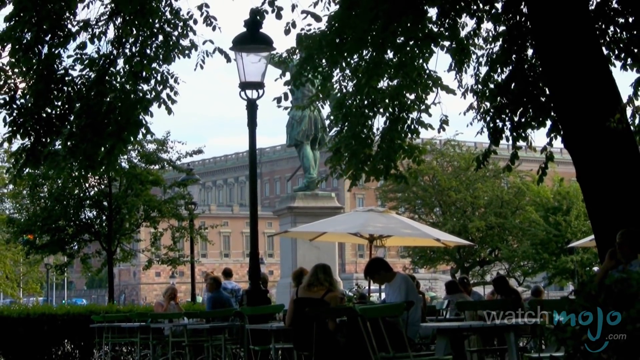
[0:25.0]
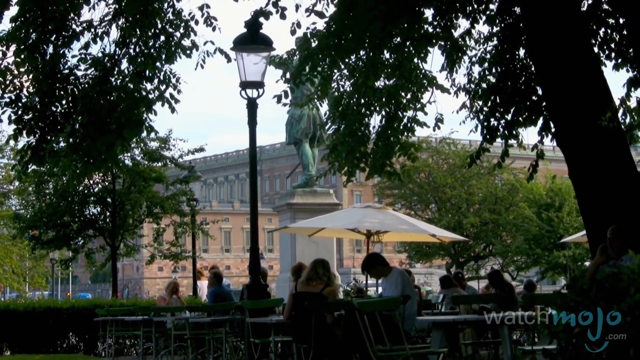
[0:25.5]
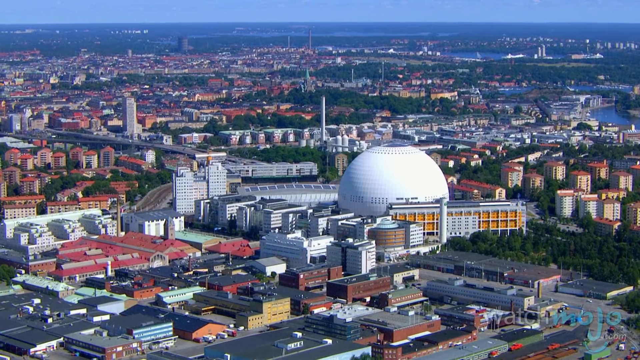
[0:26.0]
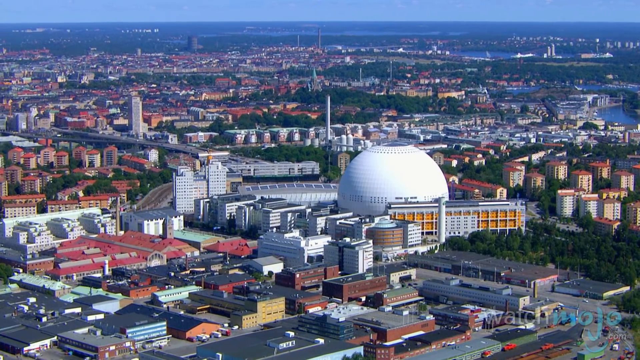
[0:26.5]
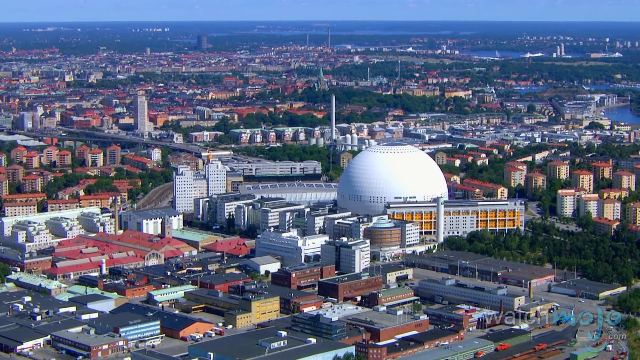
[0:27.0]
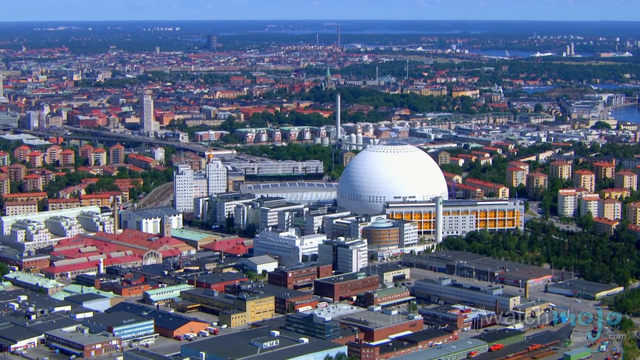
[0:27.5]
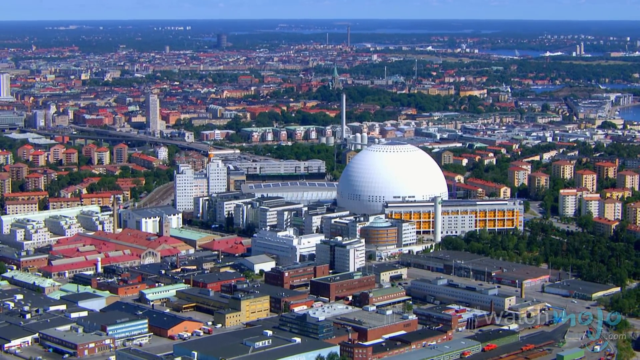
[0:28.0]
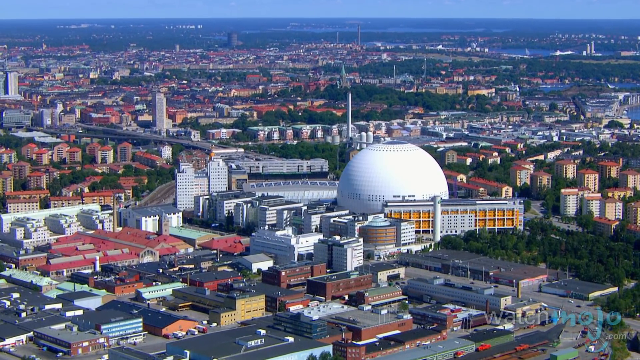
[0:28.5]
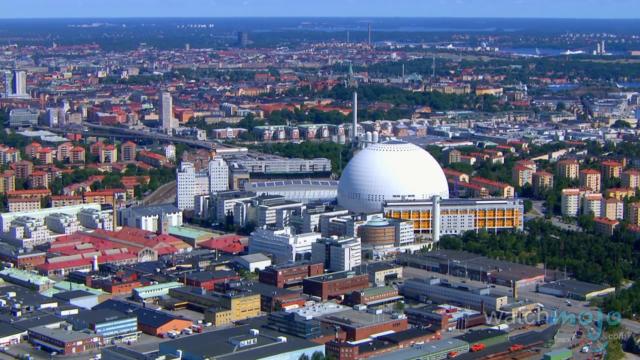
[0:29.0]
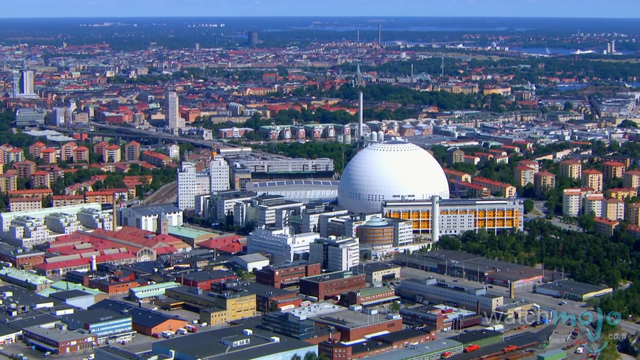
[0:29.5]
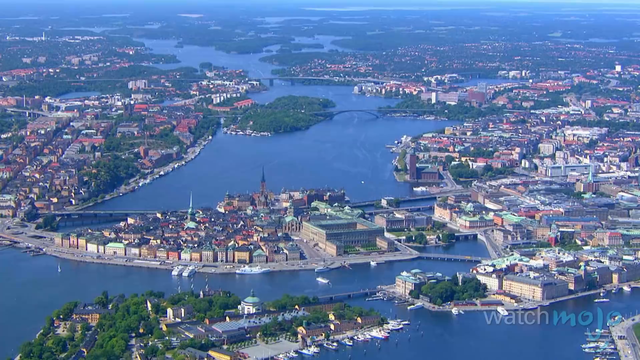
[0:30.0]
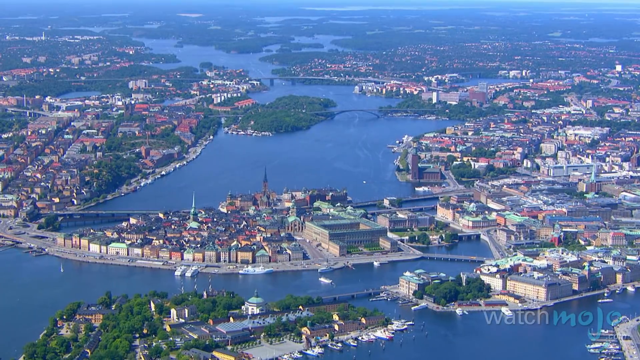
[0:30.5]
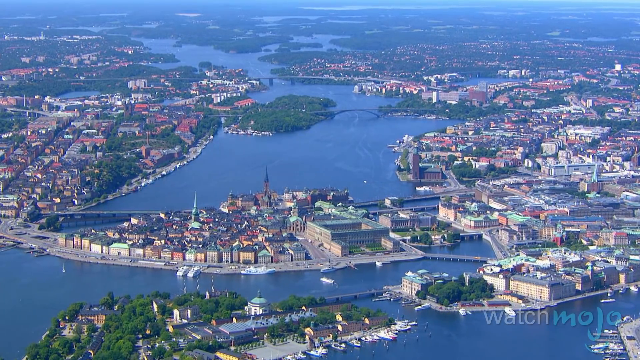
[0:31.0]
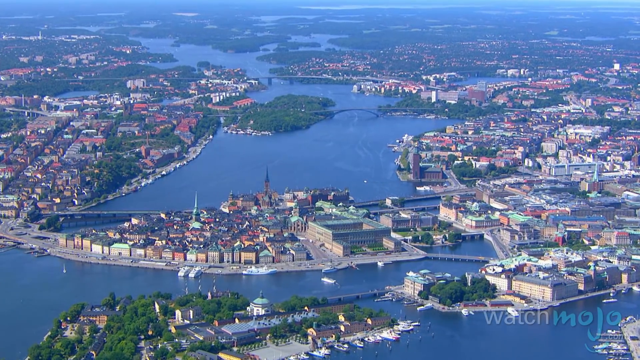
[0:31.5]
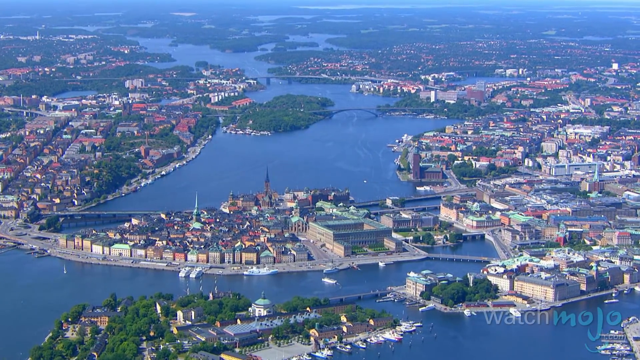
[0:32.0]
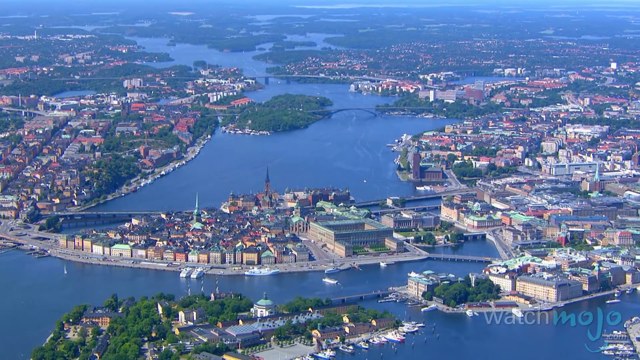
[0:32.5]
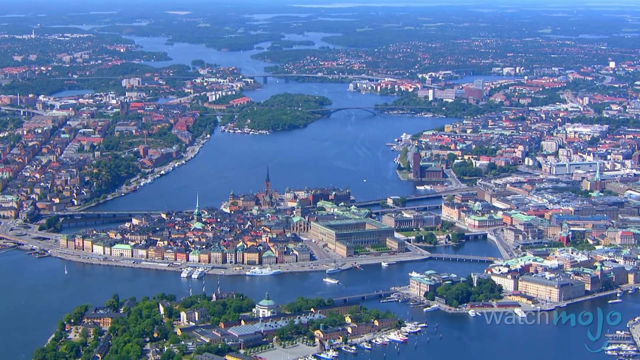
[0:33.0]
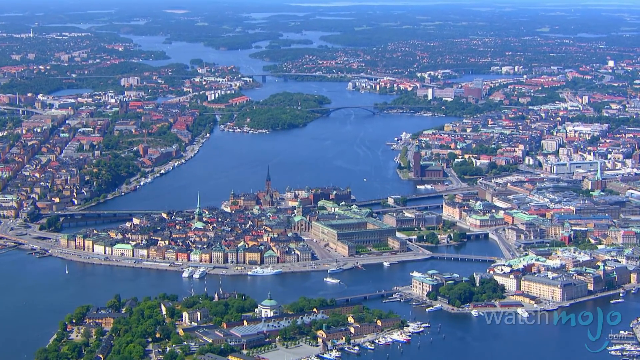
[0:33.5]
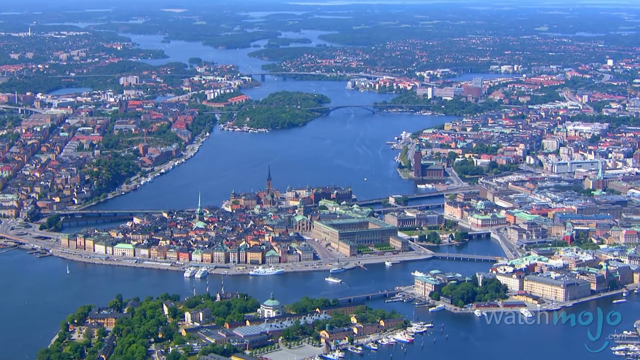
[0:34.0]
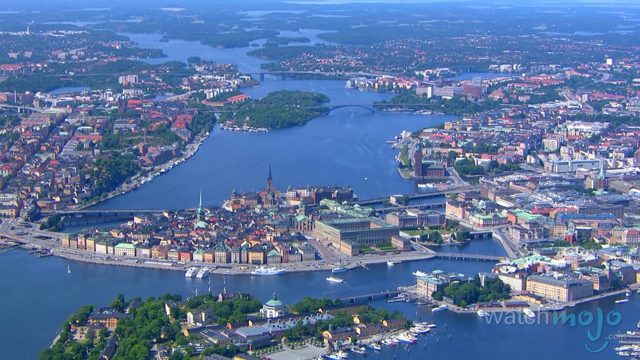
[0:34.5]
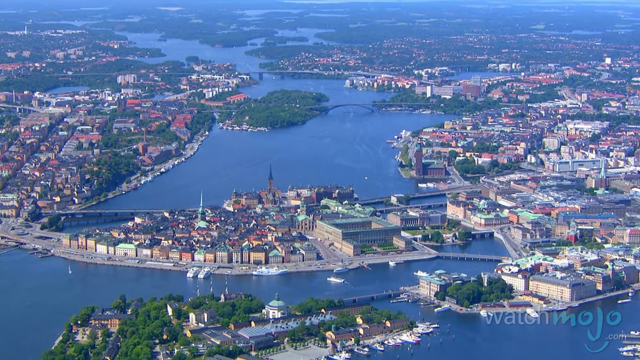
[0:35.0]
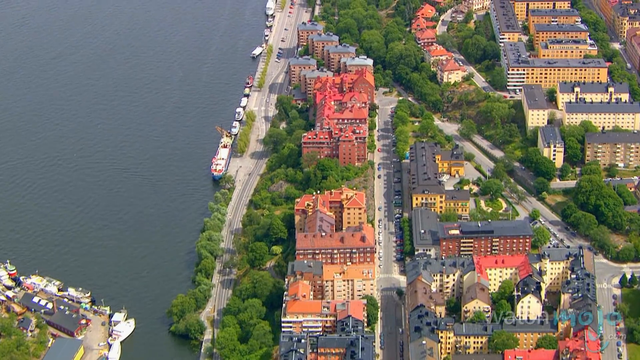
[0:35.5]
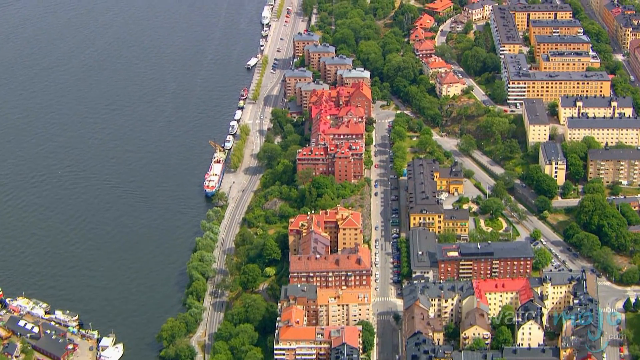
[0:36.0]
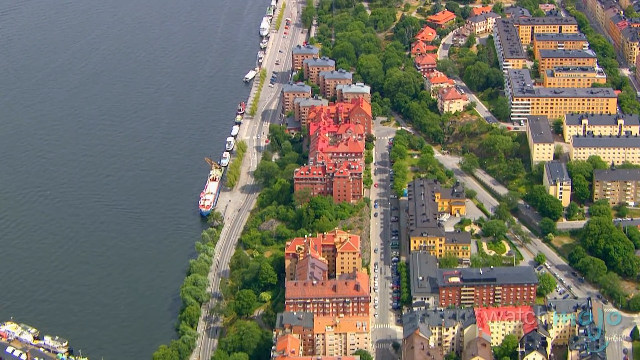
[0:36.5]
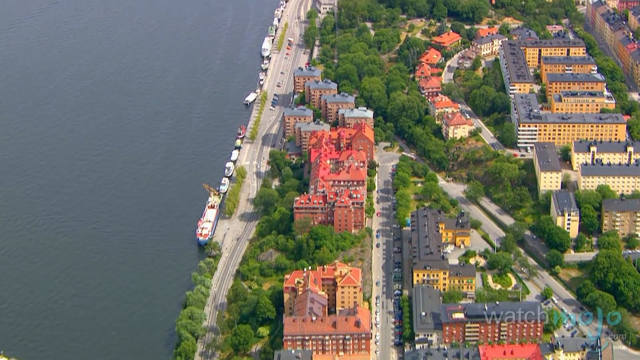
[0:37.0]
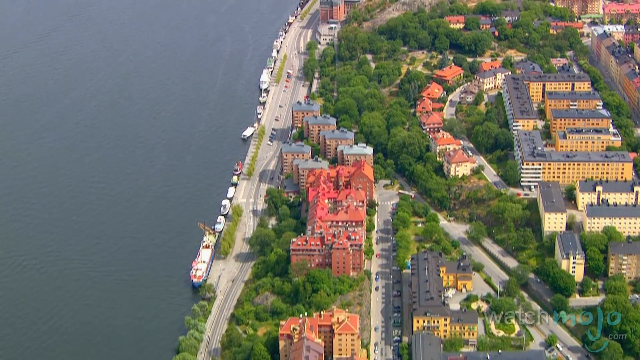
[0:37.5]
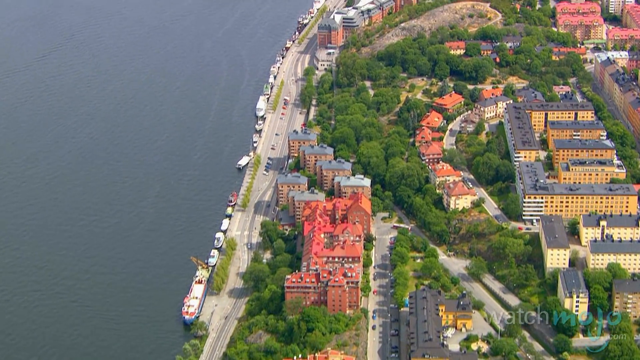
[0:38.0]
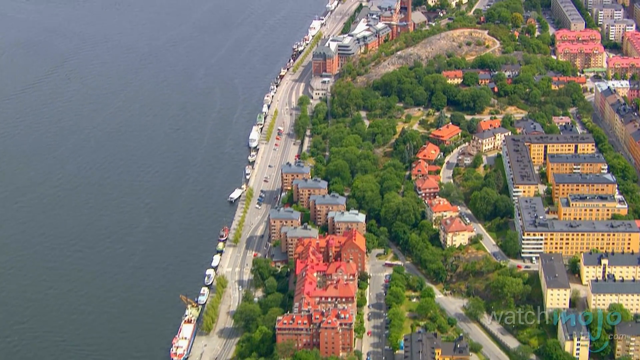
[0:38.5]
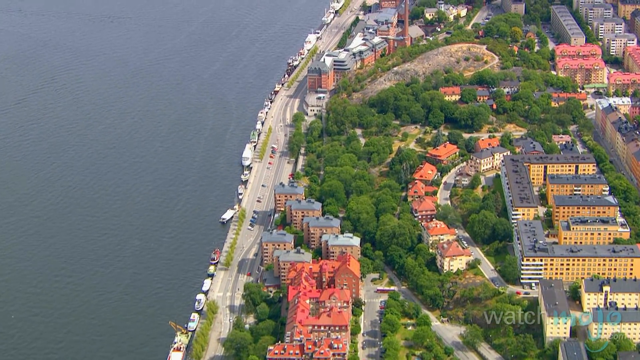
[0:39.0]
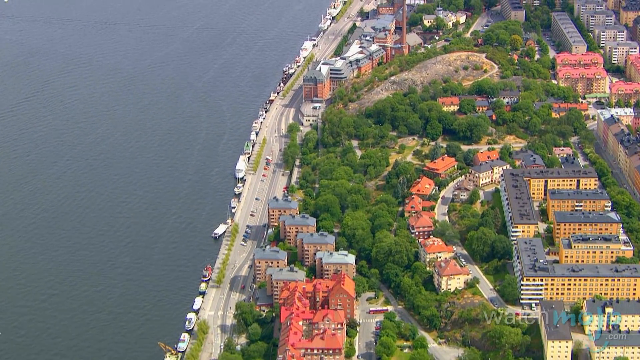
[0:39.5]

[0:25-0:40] People are sitting at tables in a park, with a white umbrella over one of the tables; they could be eating or reading books. Trees and shrubbery are around, so the area is shaded, and there is a statue in the midst of it. The area looks very historical in nature, possibly a historical district. There is also a streetlight. The view pans to a closer look at the area along the river: a street on the outside of the downtown buildings borders the water, and boats appear to be parked up against the edge of the street. There is also an aerial view of what looks like maybe a cathedral, a white dome-shaped building in the midst of downtown; it does not look ornate, so it could be some type of learning institution or simply a different architectural style.